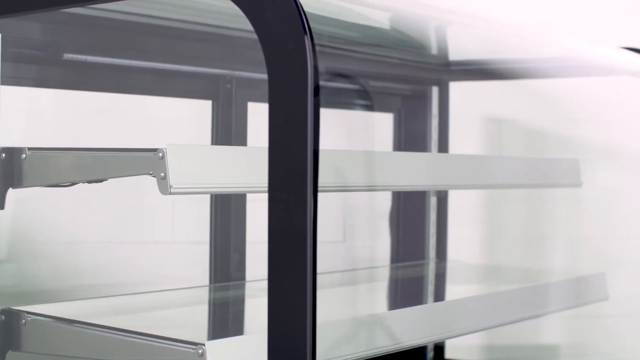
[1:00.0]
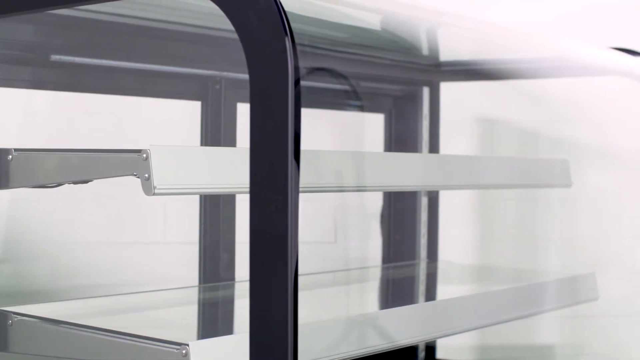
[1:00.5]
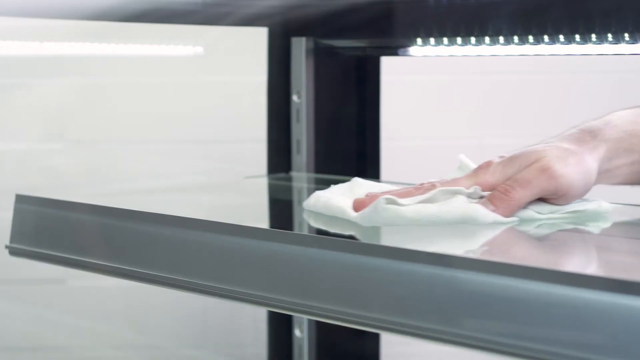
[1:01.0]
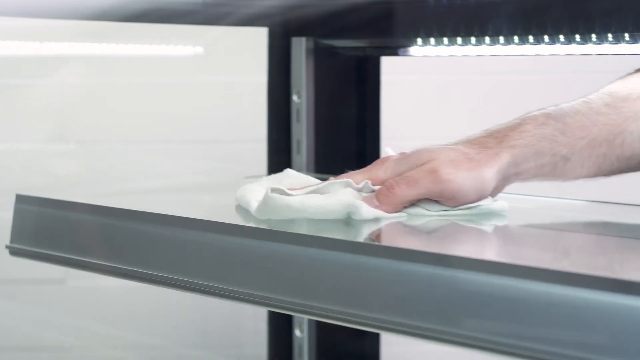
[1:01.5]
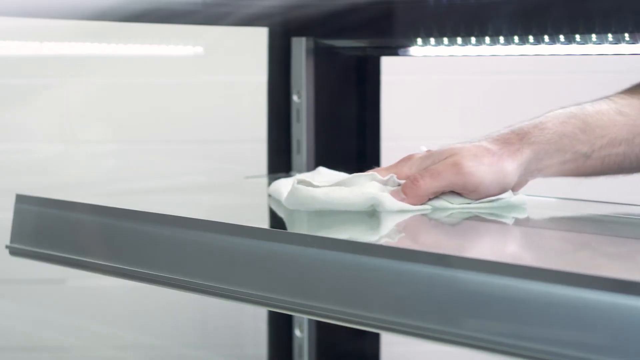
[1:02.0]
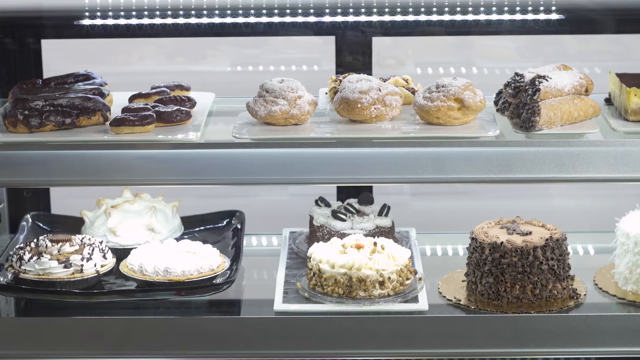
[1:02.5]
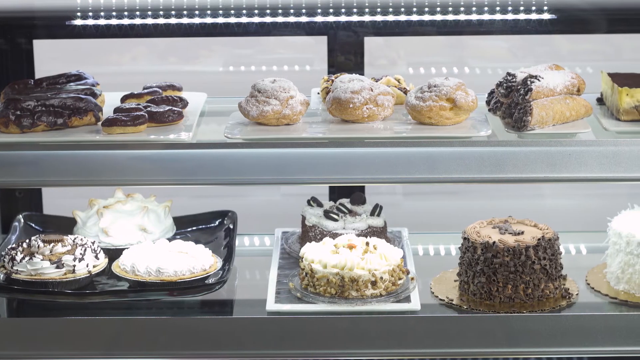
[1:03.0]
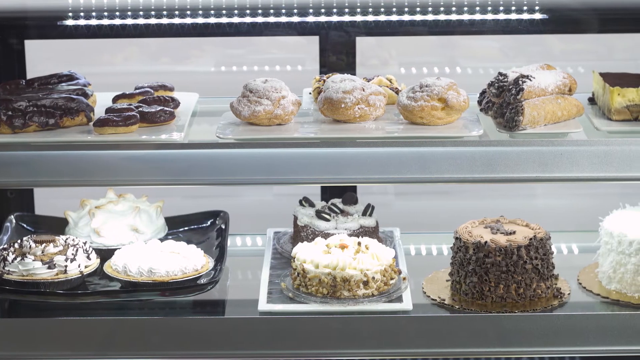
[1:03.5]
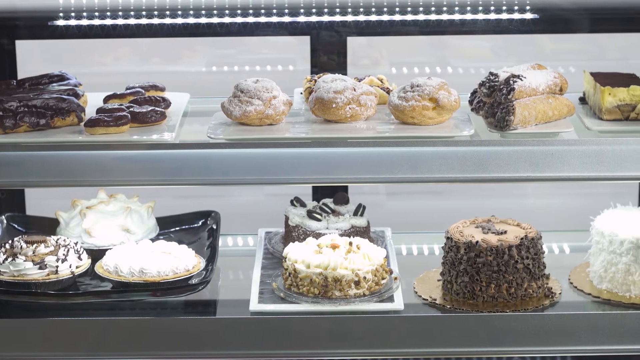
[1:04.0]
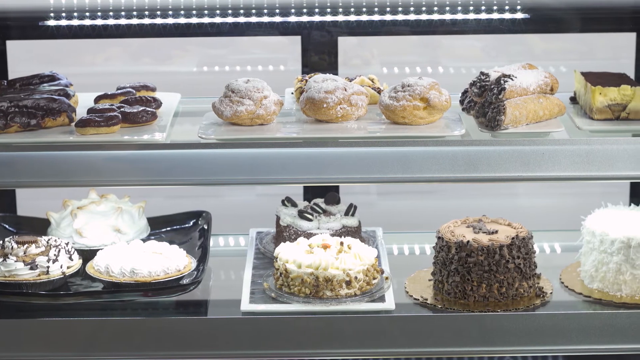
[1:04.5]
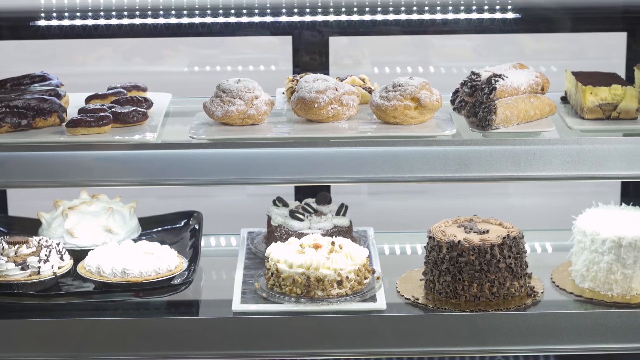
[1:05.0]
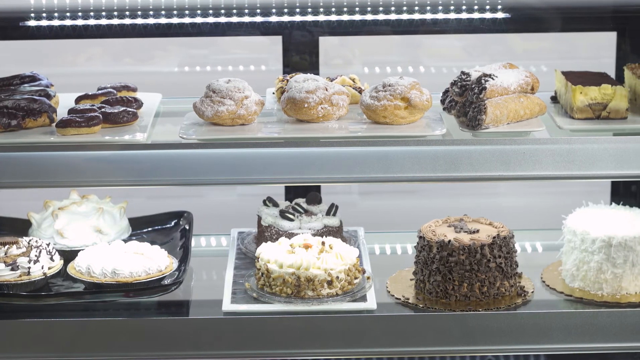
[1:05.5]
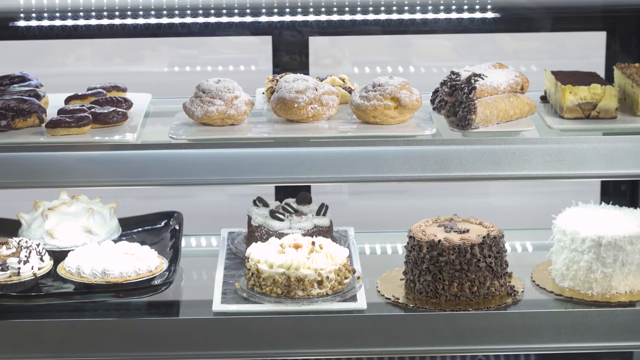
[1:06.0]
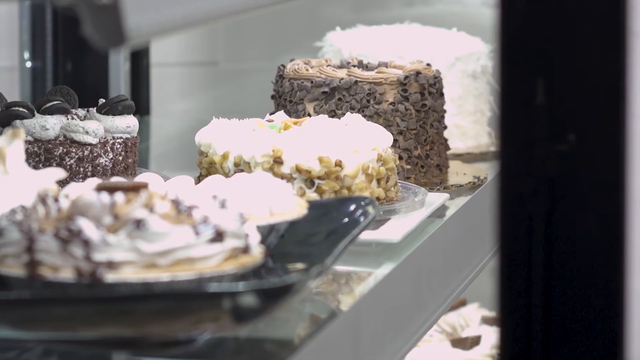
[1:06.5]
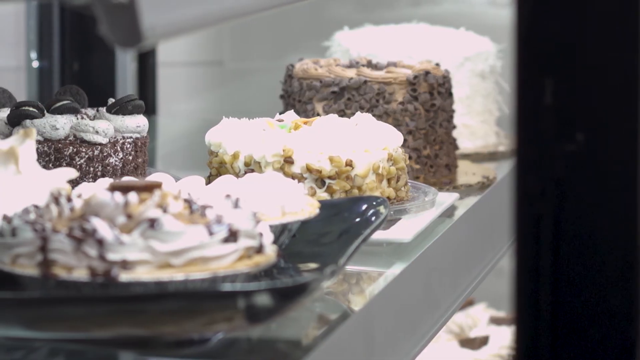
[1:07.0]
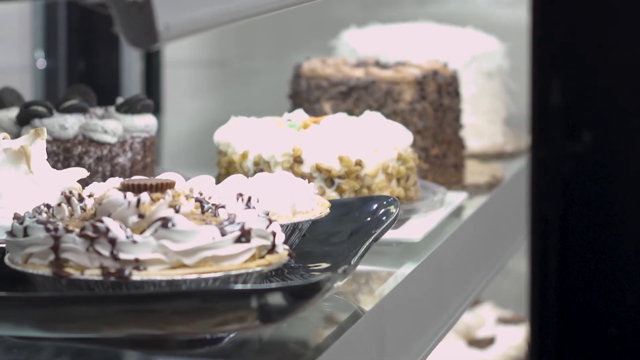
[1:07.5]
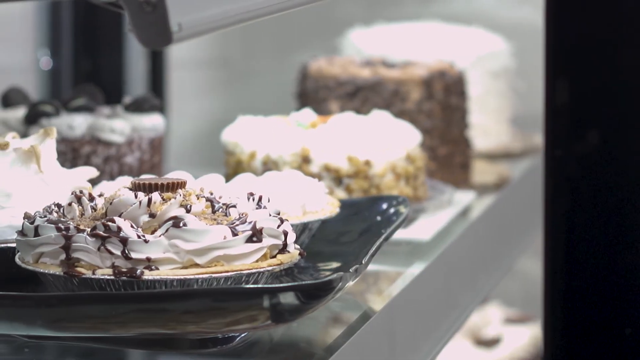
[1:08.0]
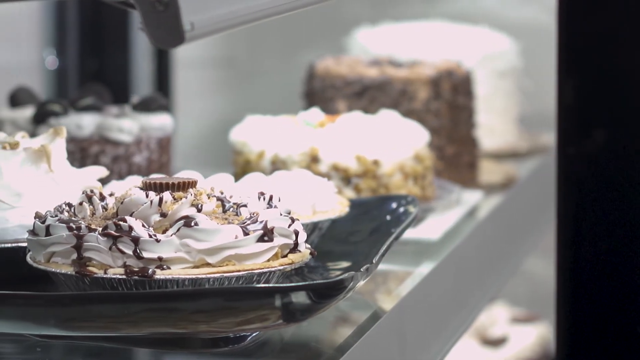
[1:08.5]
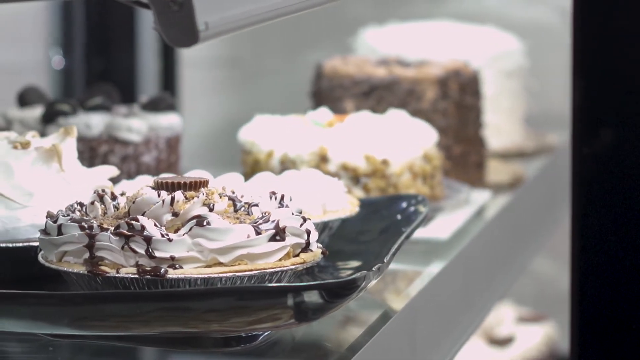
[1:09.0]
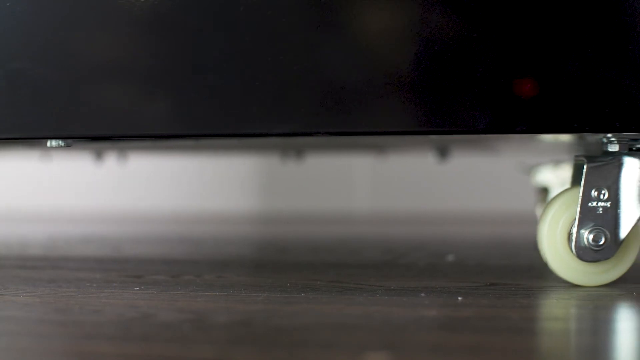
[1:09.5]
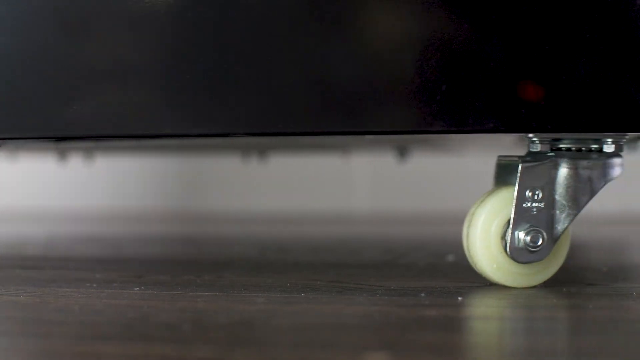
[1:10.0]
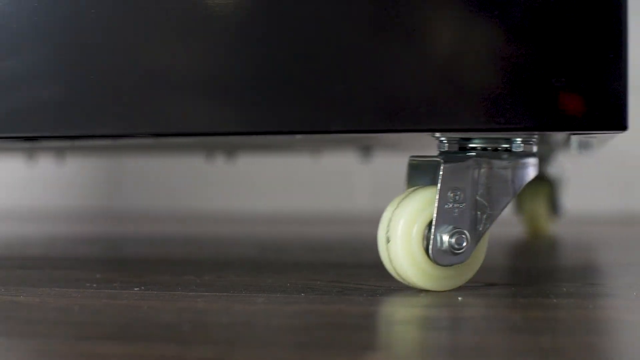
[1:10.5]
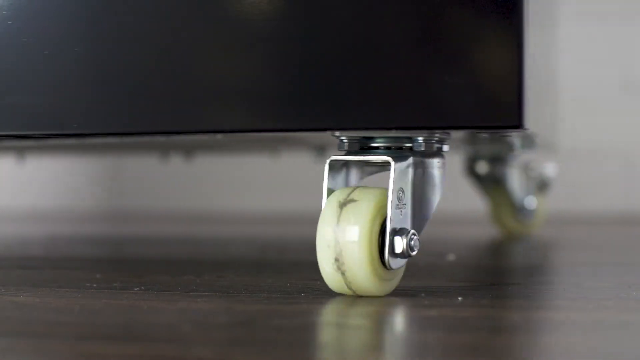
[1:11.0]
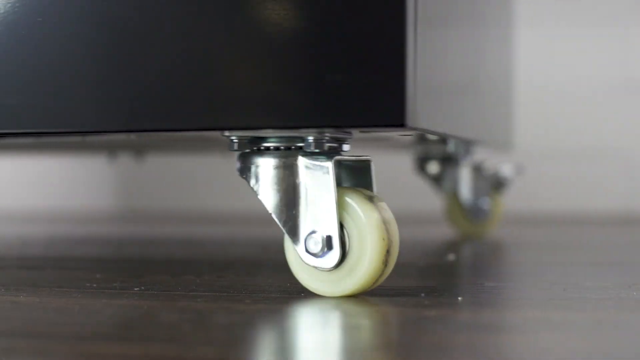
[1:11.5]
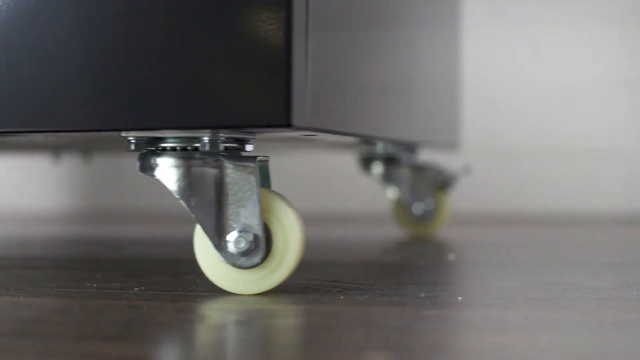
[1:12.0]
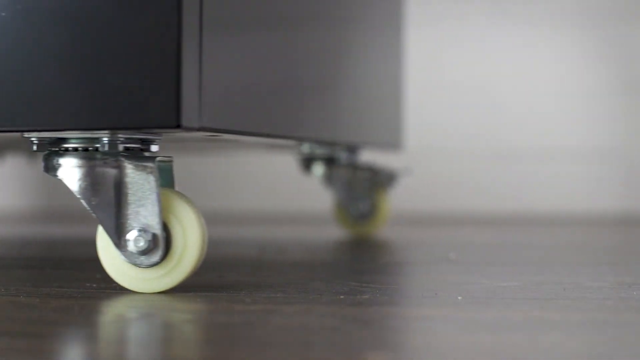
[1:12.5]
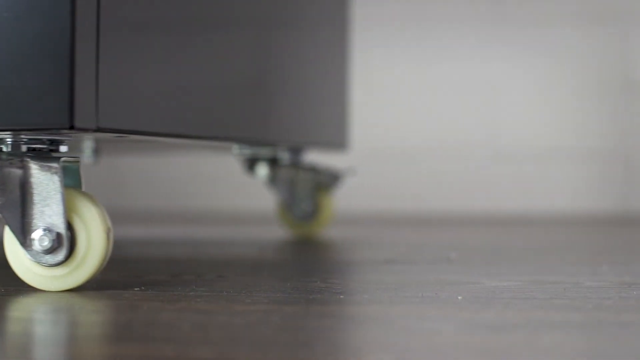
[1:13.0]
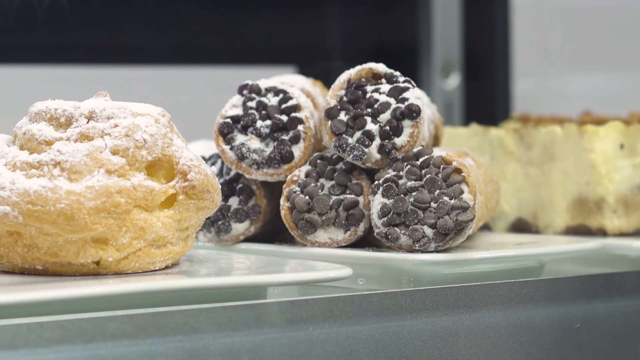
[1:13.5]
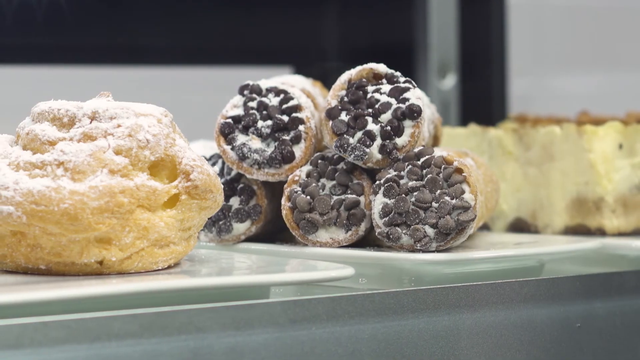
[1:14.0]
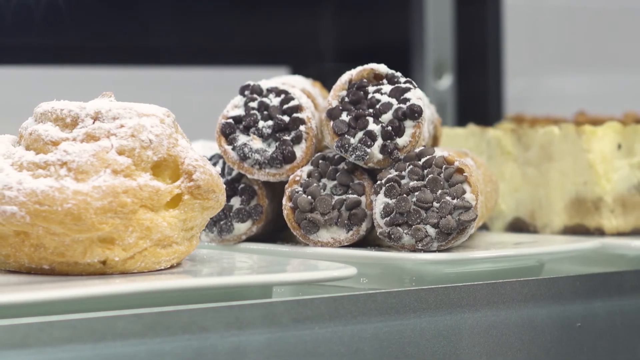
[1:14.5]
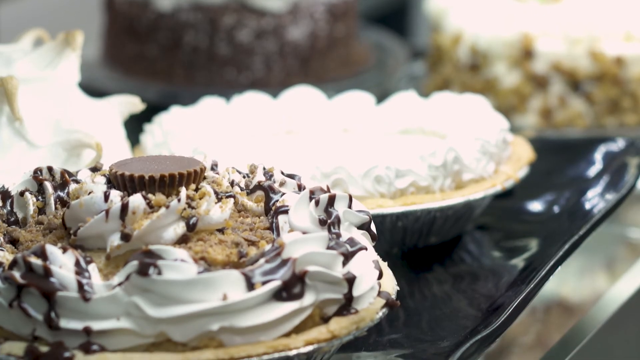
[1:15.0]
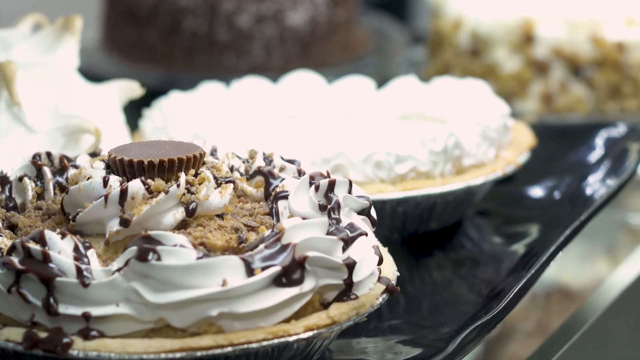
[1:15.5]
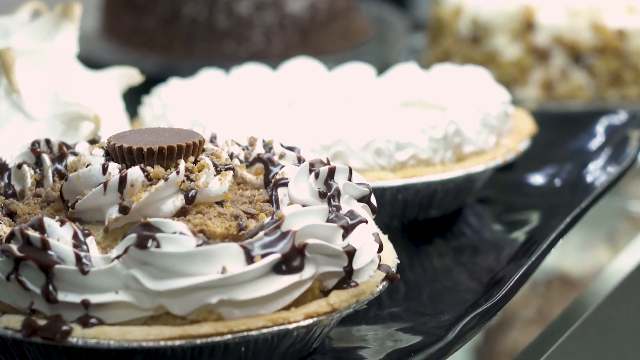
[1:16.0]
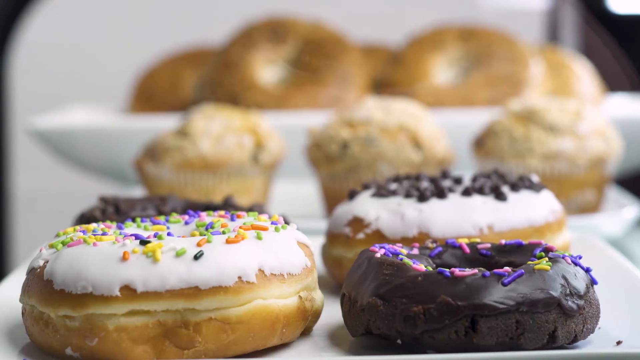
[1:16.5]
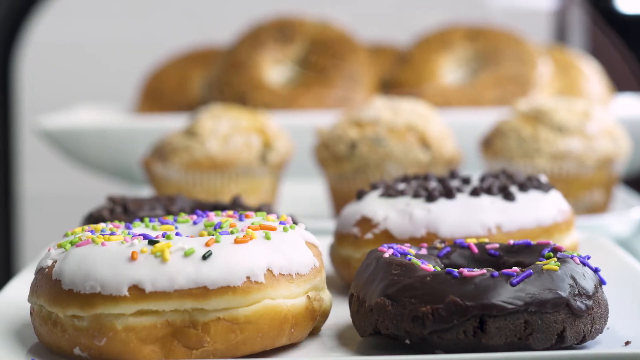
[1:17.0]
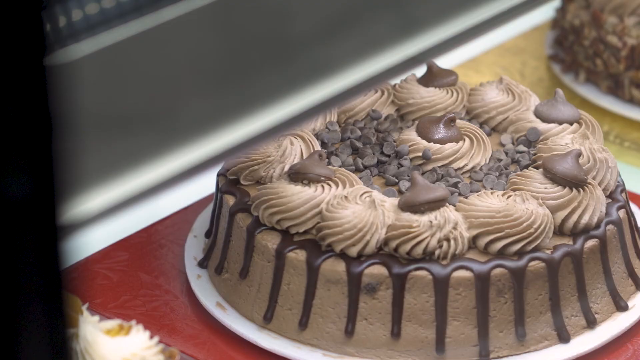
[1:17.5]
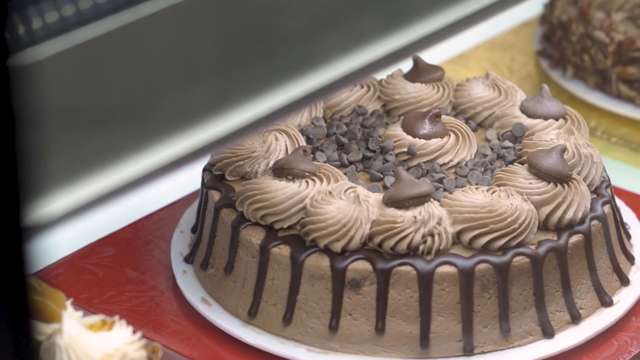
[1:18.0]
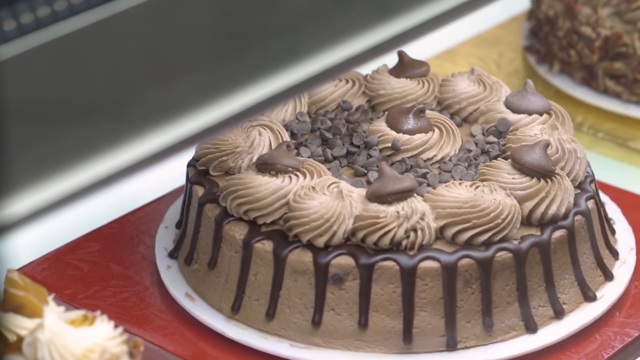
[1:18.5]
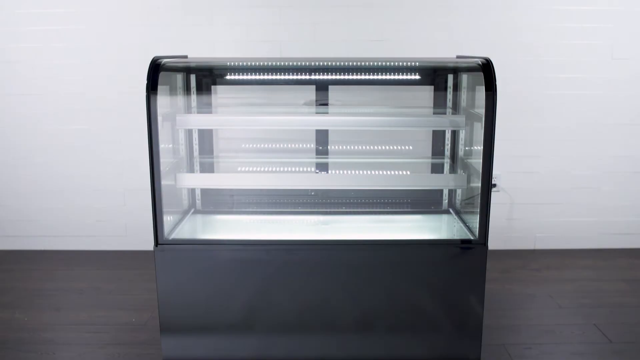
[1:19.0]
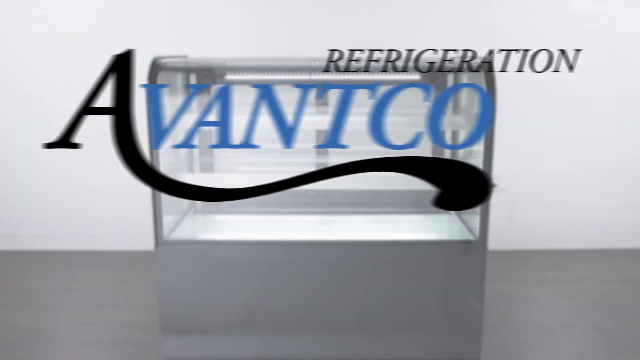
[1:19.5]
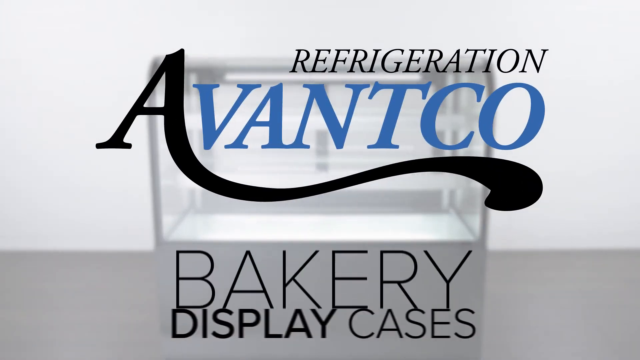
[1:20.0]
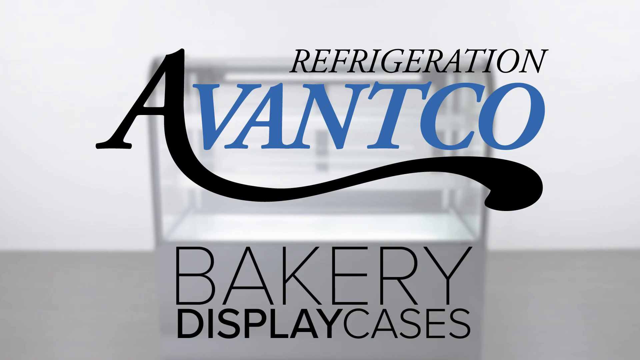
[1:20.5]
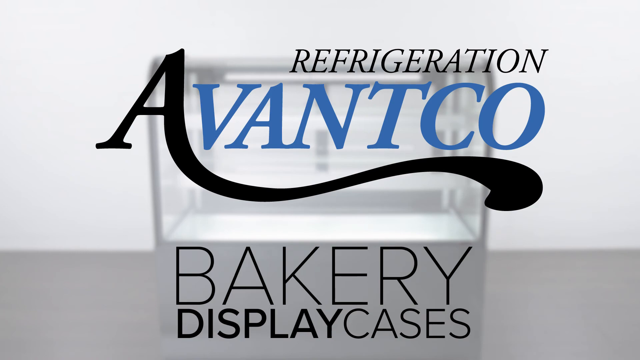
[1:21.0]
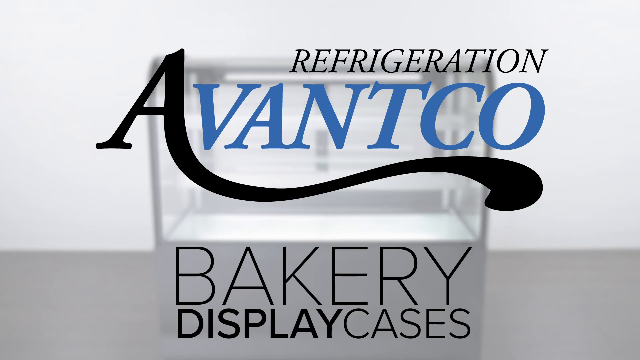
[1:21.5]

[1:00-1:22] Someone wipes the inside of the refrigerator, which is some sort of glass unit of 36 and 48 inches and is movable. Inside are dry cakes and other cakes: a cake decorated with cashew nuts, a vanilla cake, a chocolate cake, something that looks like bread glazed with chocolate on top, doughnuts without any cream, and doughnuts with cream.